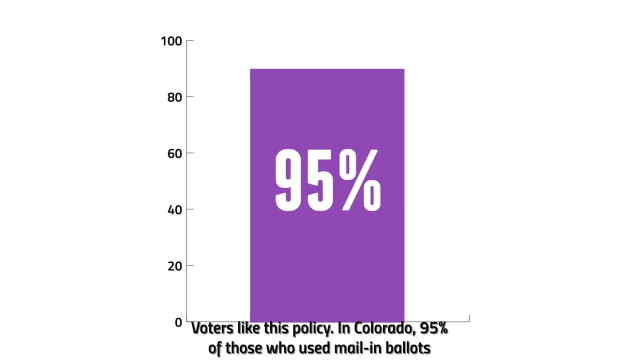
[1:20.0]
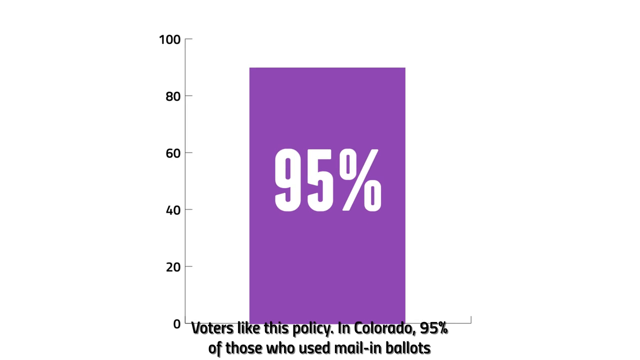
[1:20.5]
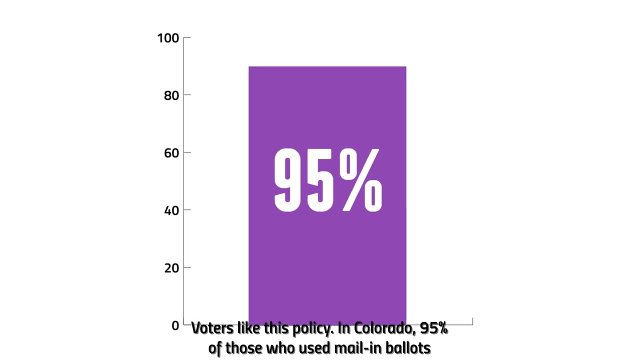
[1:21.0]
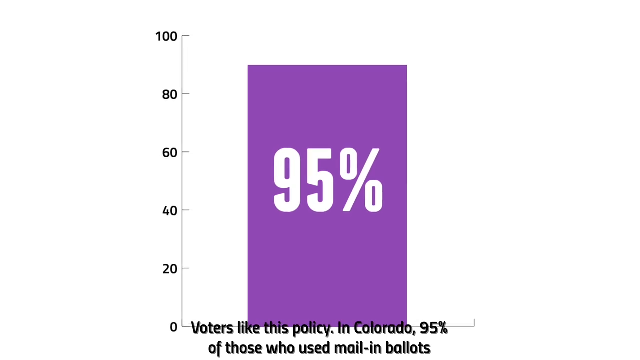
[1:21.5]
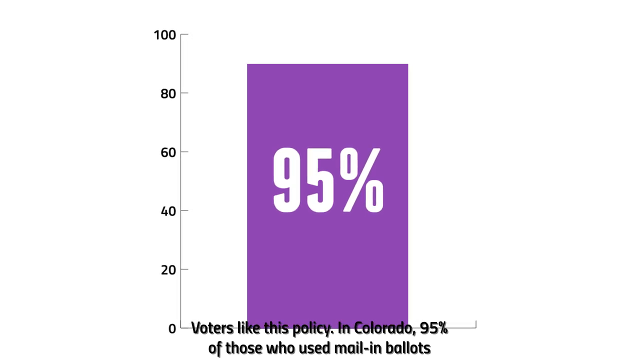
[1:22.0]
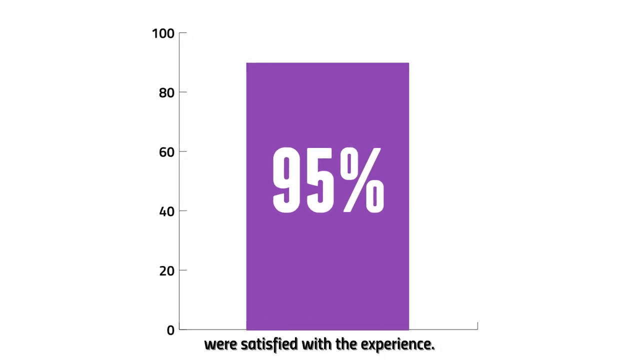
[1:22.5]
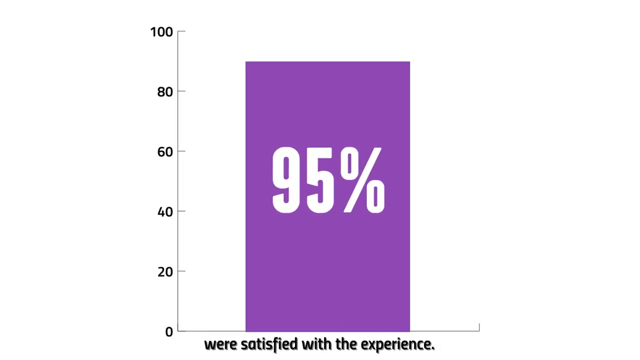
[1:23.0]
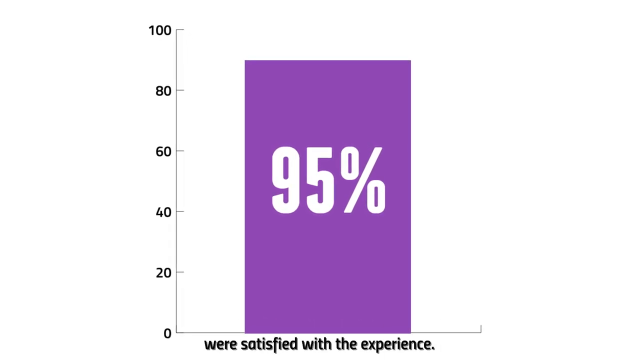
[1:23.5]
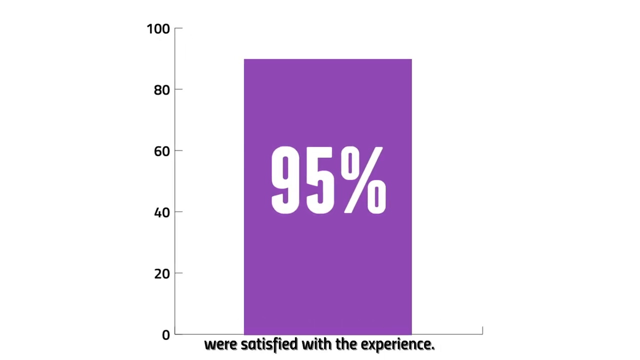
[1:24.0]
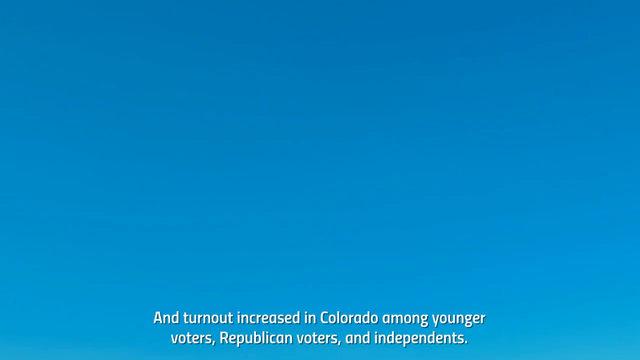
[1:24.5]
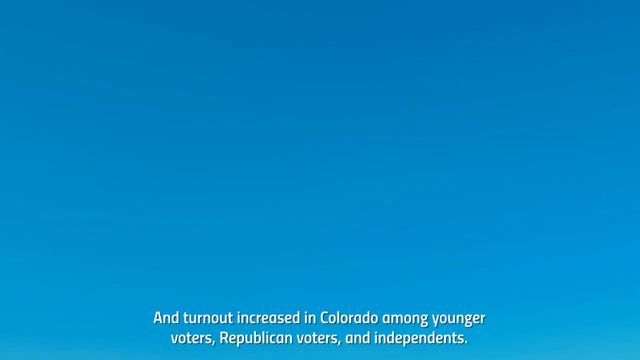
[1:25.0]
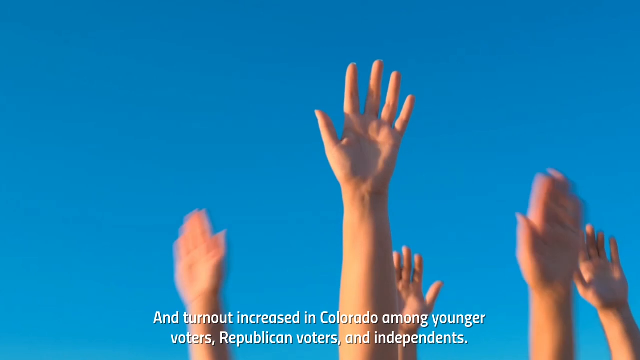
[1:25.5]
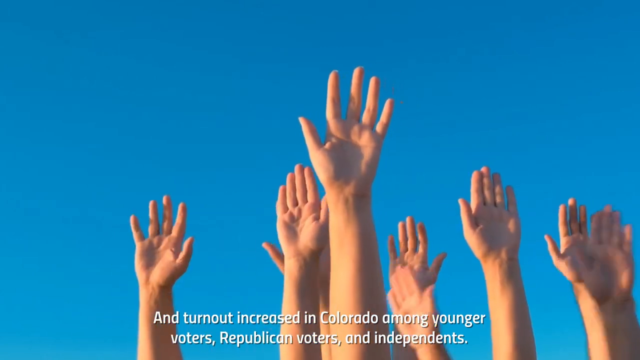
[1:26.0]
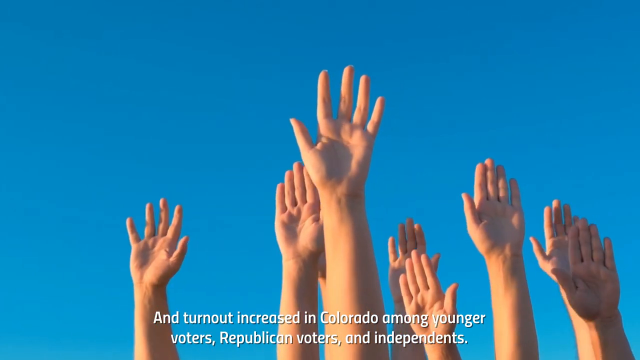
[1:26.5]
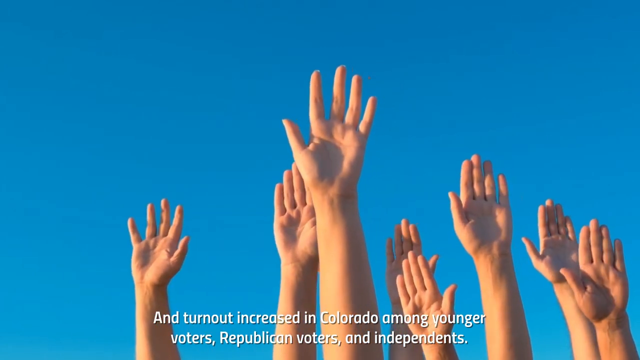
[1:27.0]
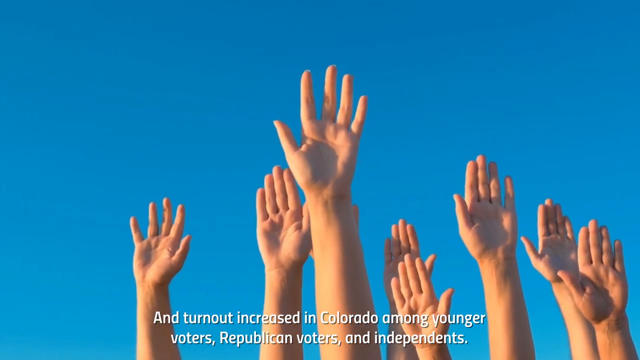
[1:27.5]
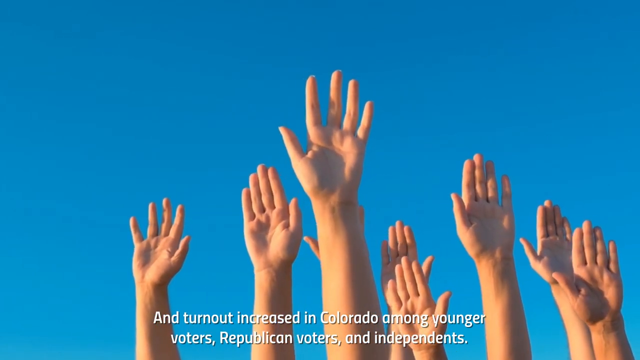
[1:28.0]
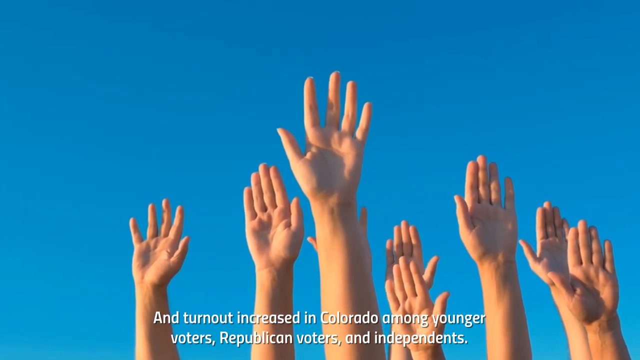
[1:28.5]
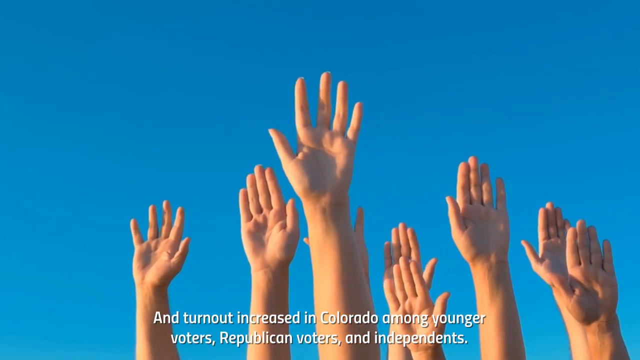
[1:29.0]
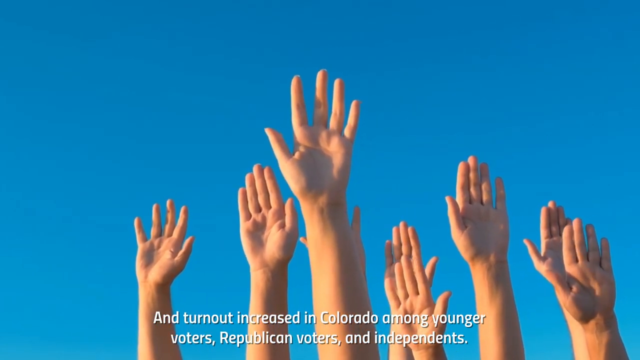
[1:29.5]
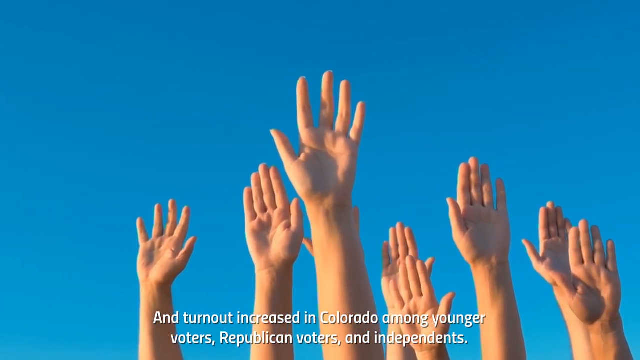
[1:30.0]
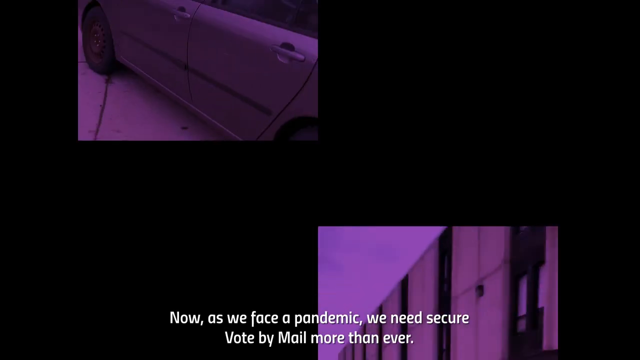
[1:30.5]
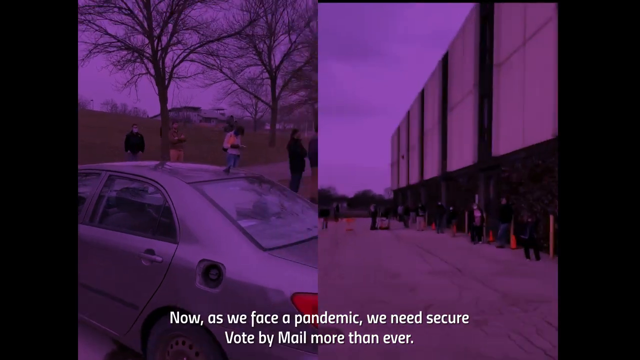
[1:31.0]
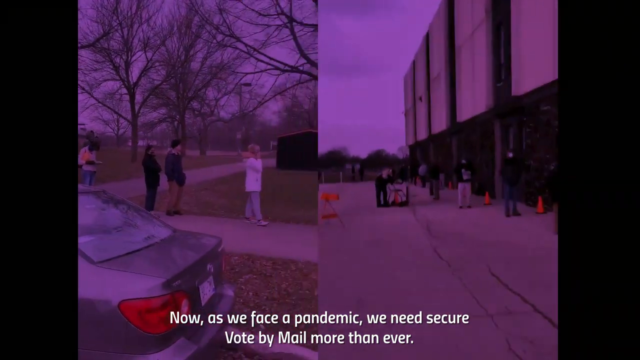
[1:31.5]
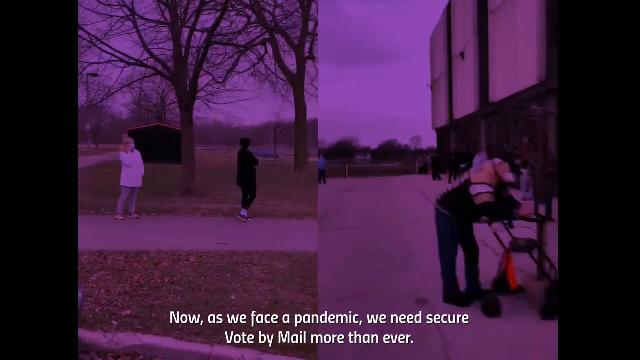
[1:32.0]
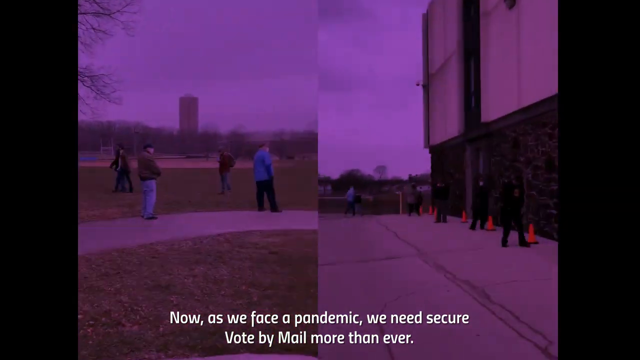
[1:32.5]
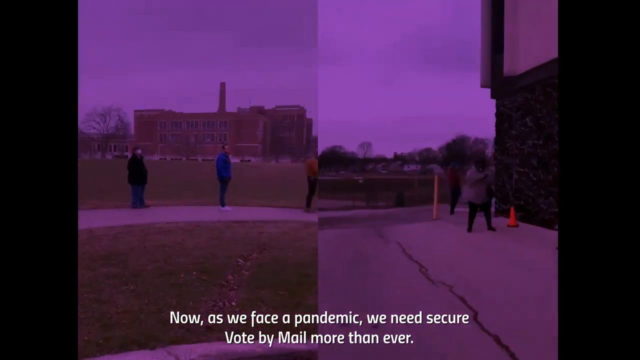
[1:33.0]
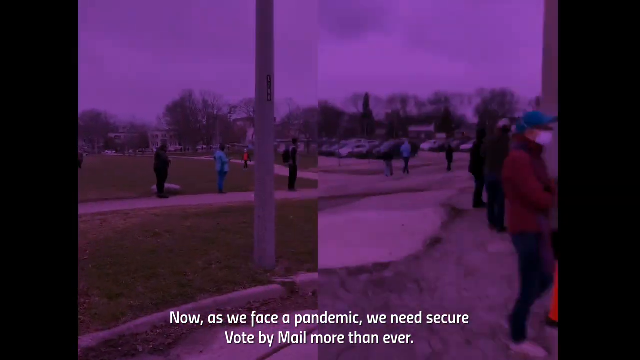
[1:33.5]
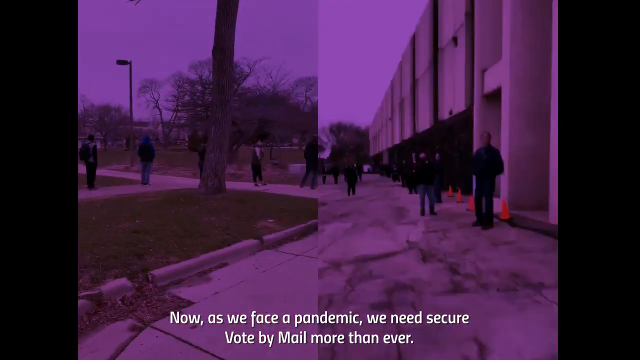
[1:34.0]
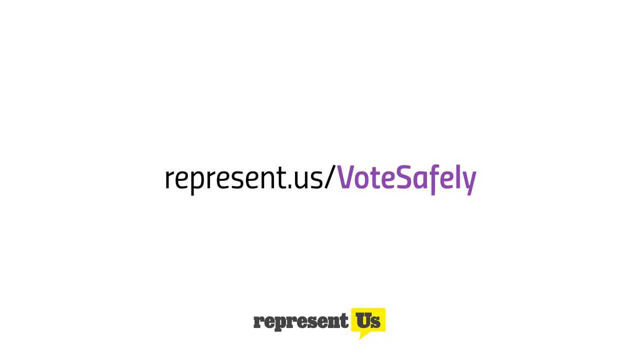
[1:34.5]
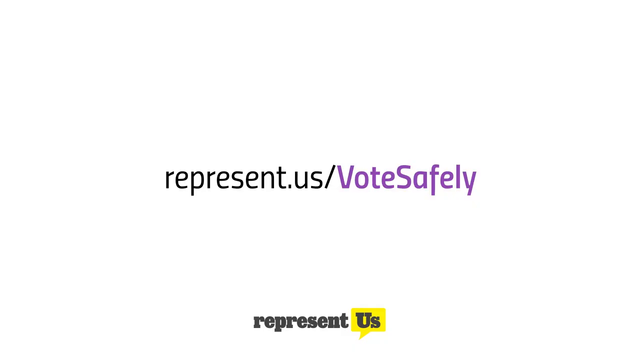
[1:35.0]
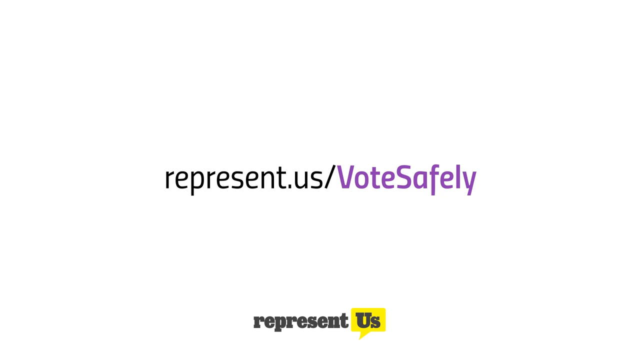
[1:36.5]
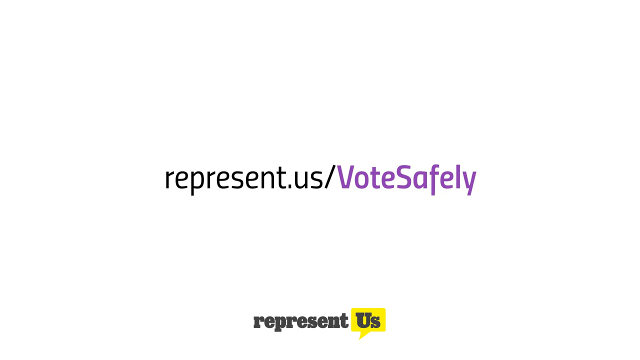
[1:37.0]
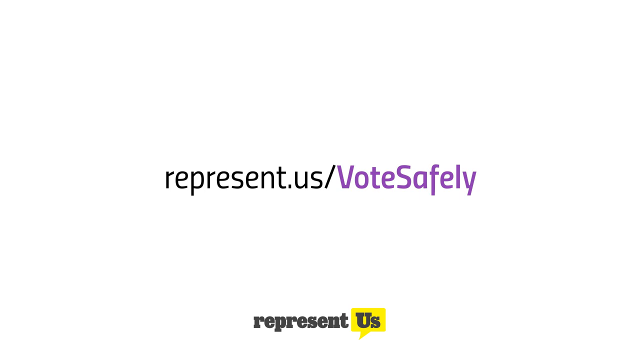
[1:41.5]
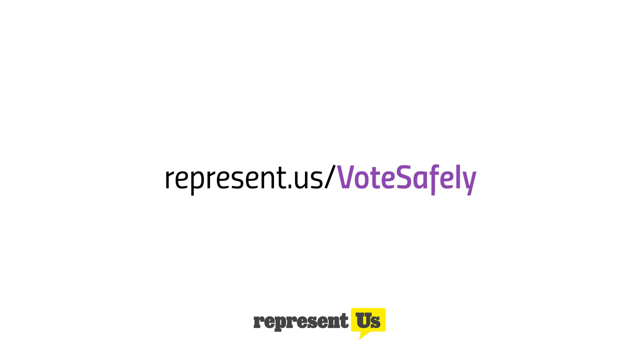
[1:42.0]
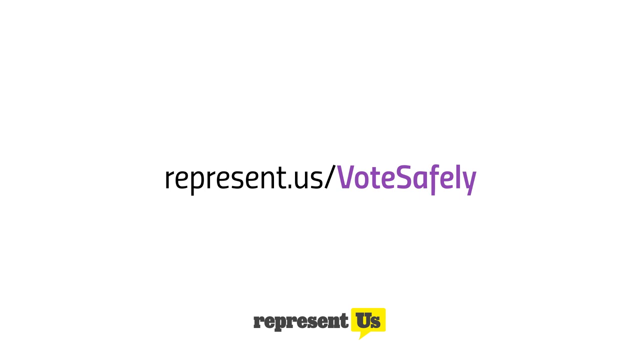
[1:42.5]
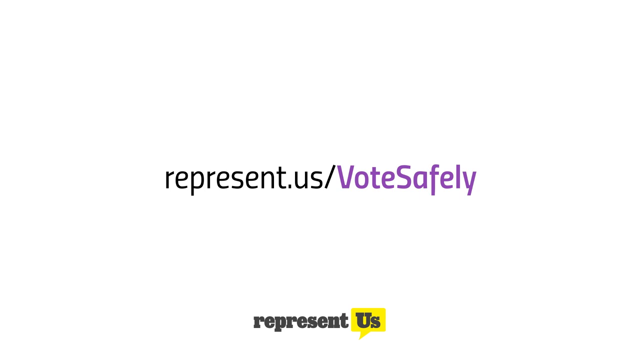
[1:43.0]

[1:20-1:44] A screen shows 95% figures. A fast-forwarded shot shows people walking down a street, and the camera moves along the road and through a group of people, apparently a line of people waiting to vote. Words are written on a white screen, seemingly a slogan encouraging people to work together.